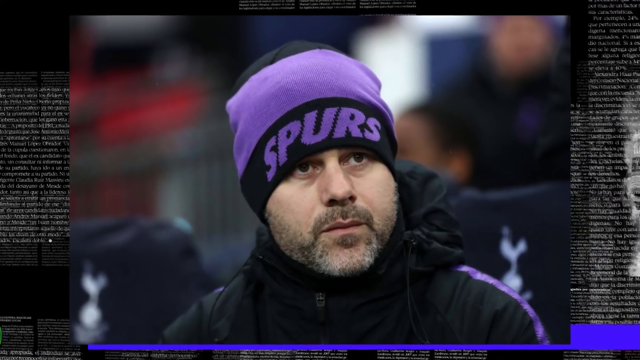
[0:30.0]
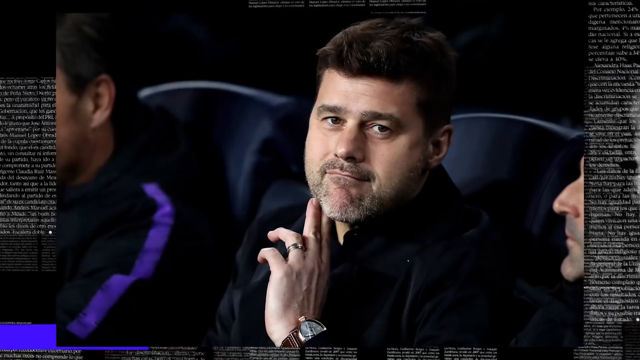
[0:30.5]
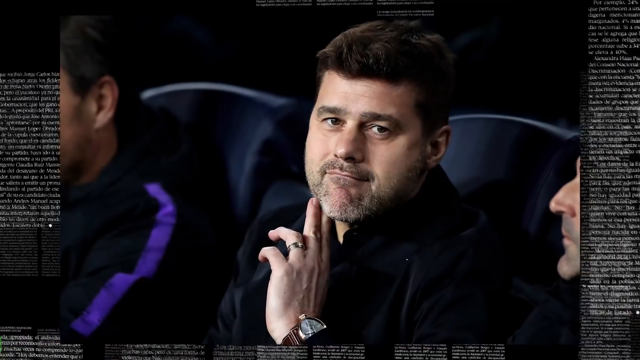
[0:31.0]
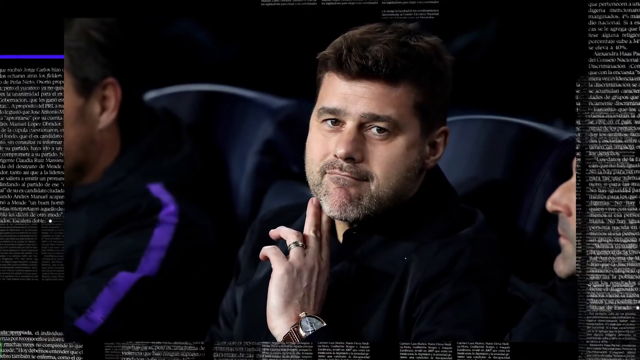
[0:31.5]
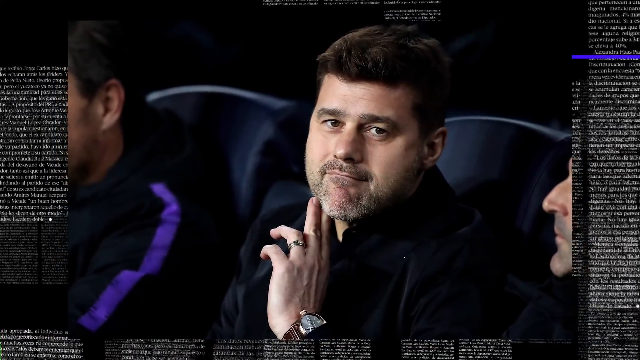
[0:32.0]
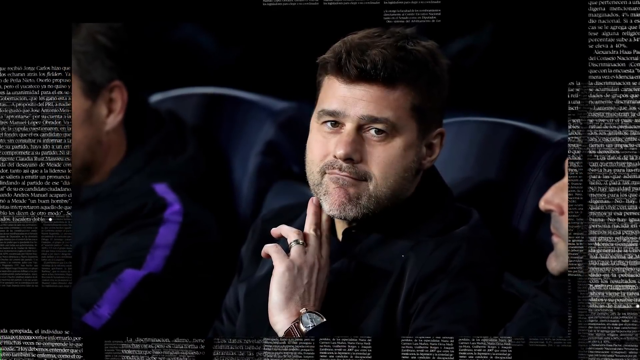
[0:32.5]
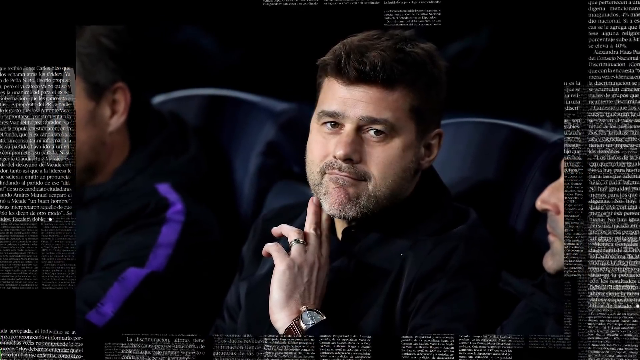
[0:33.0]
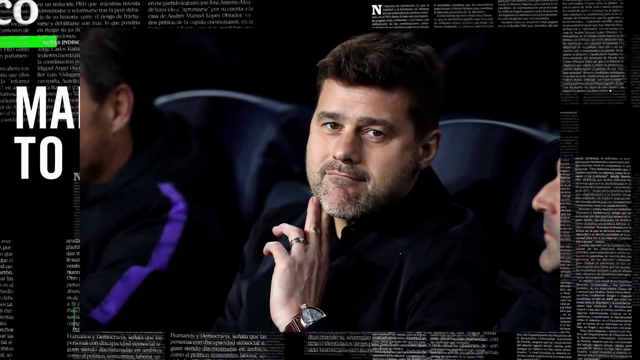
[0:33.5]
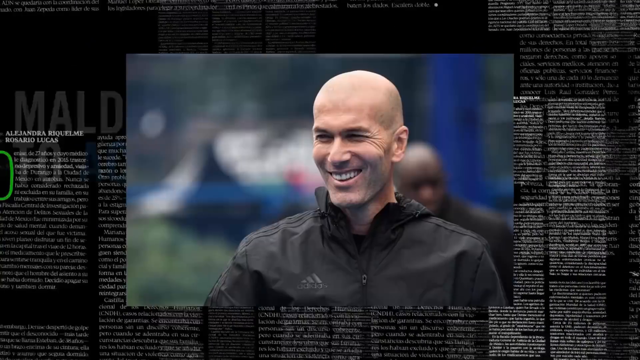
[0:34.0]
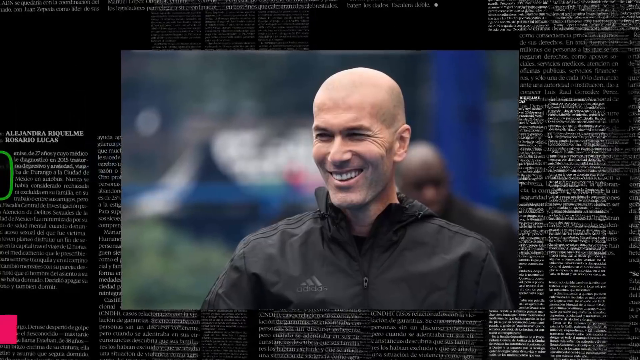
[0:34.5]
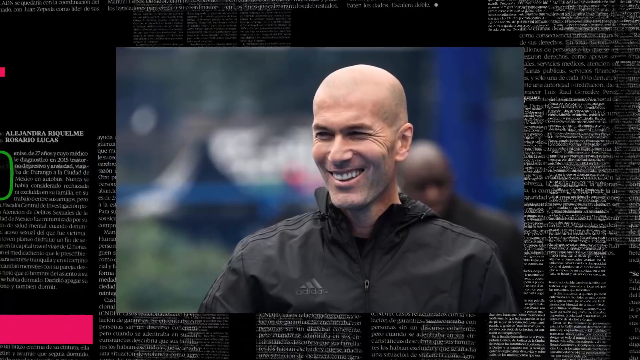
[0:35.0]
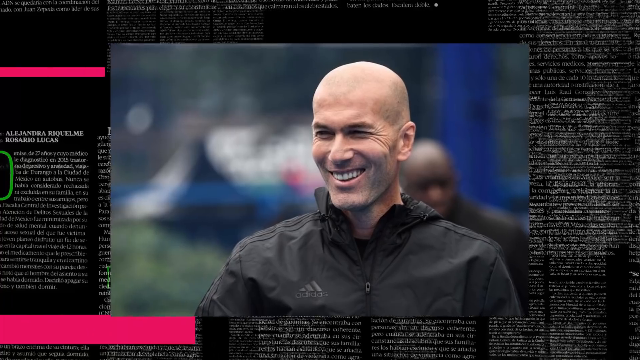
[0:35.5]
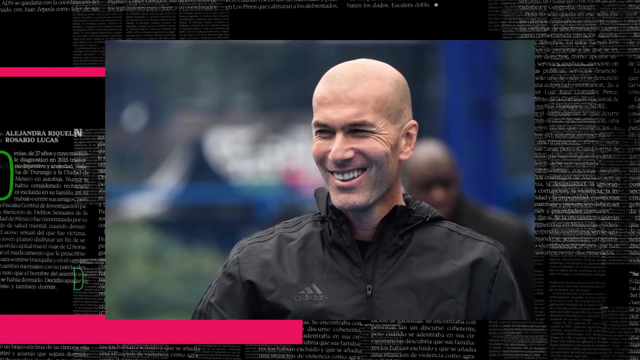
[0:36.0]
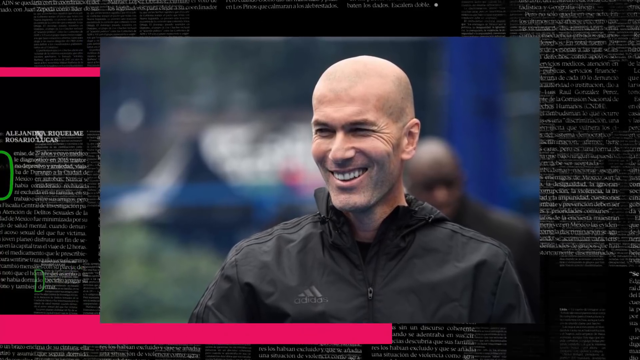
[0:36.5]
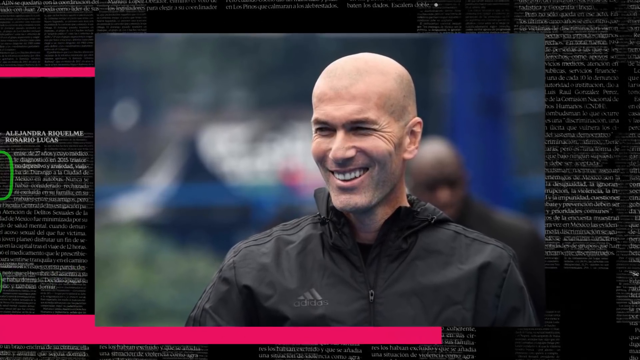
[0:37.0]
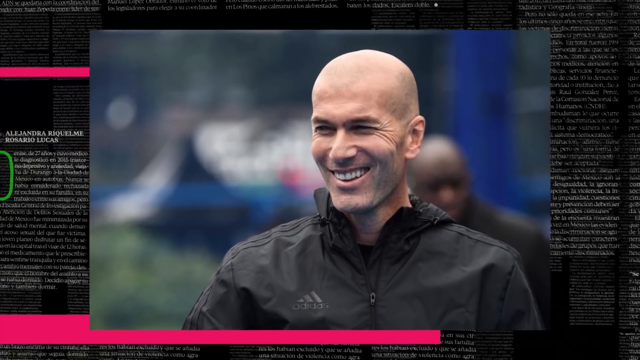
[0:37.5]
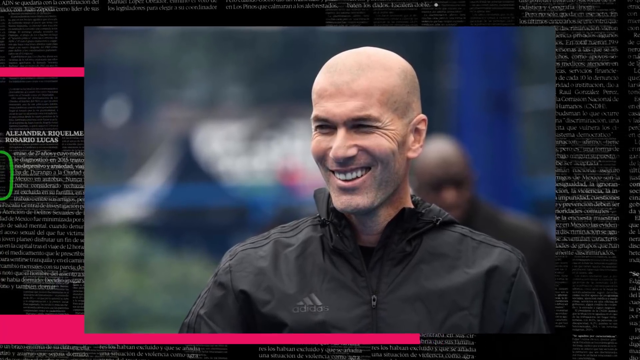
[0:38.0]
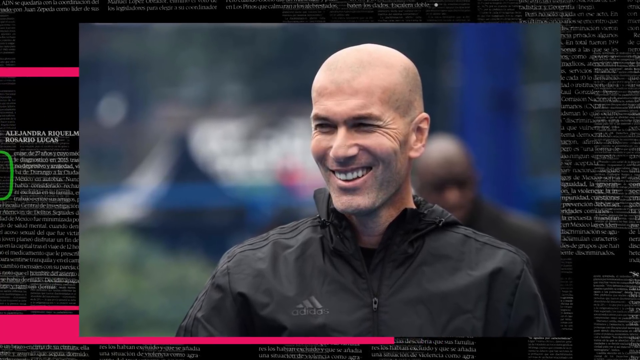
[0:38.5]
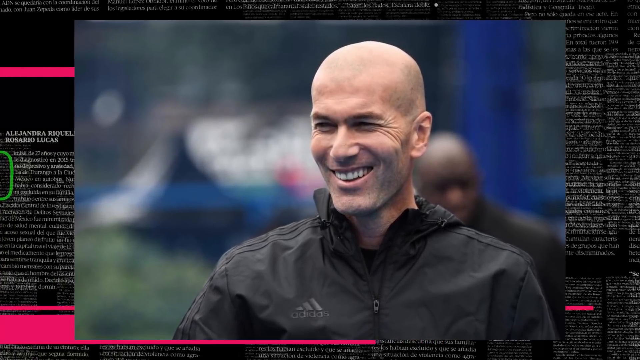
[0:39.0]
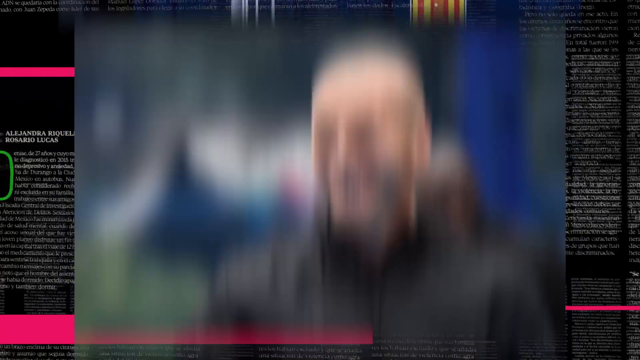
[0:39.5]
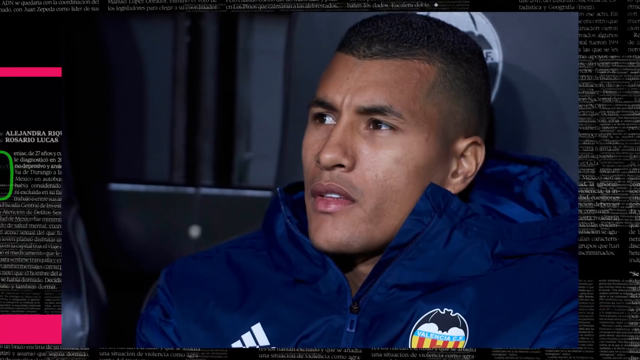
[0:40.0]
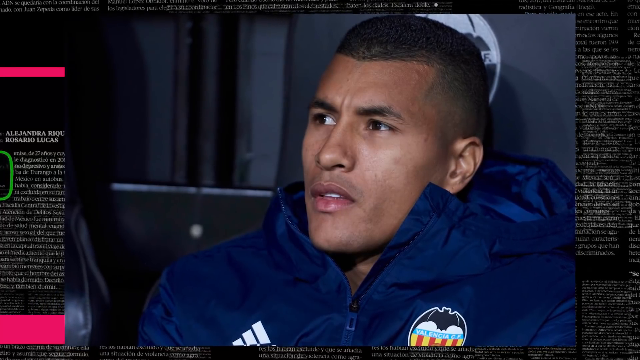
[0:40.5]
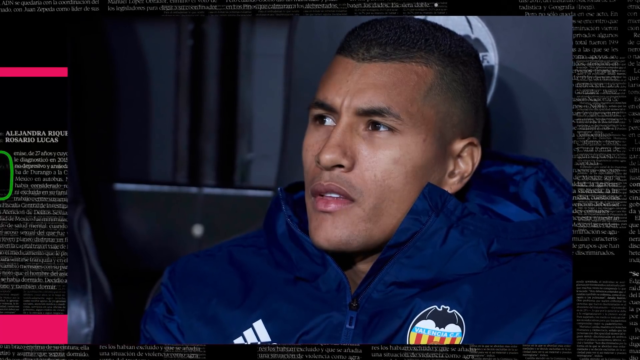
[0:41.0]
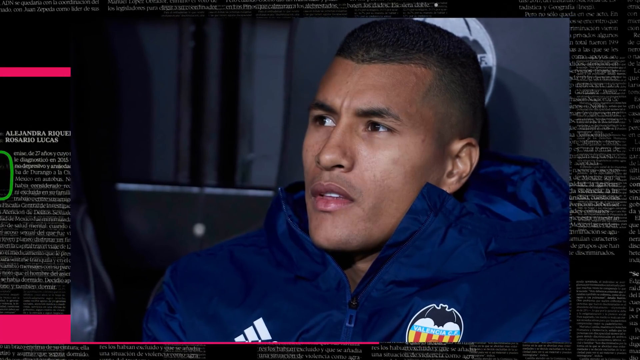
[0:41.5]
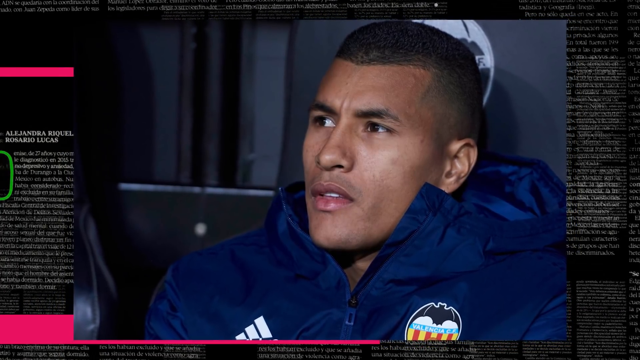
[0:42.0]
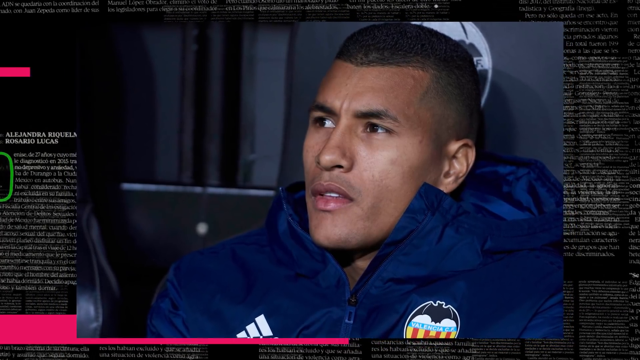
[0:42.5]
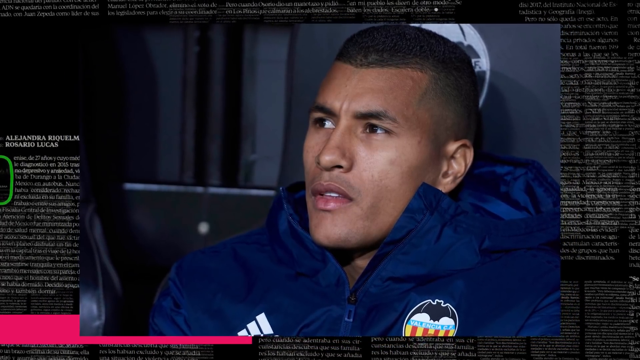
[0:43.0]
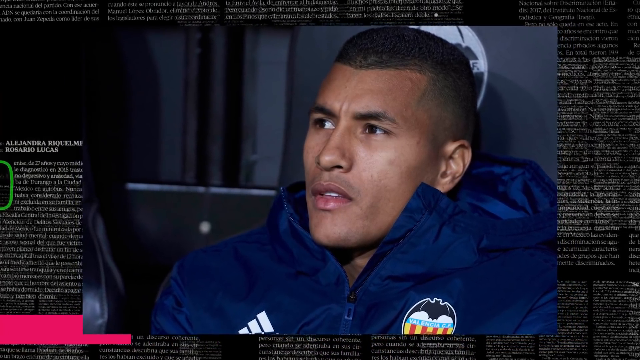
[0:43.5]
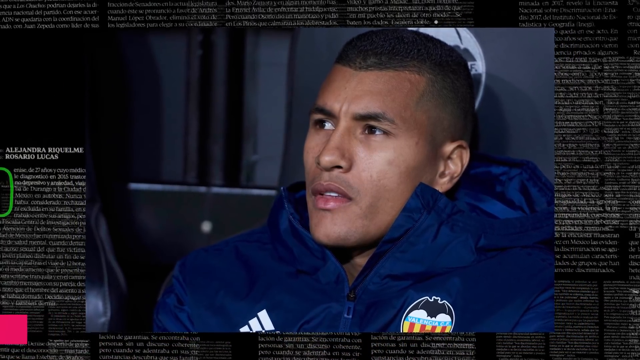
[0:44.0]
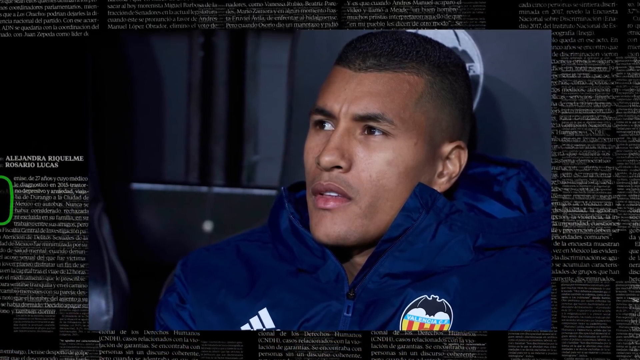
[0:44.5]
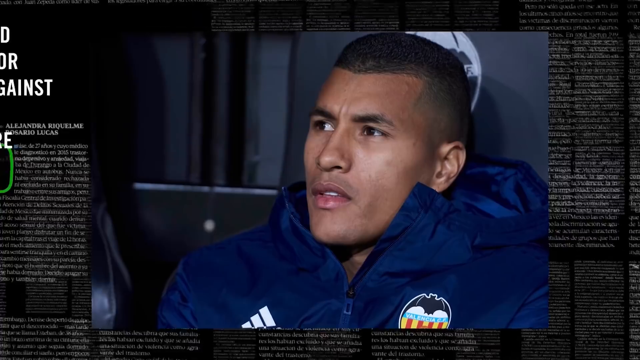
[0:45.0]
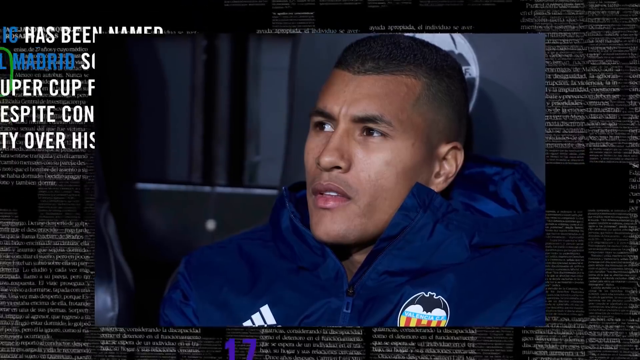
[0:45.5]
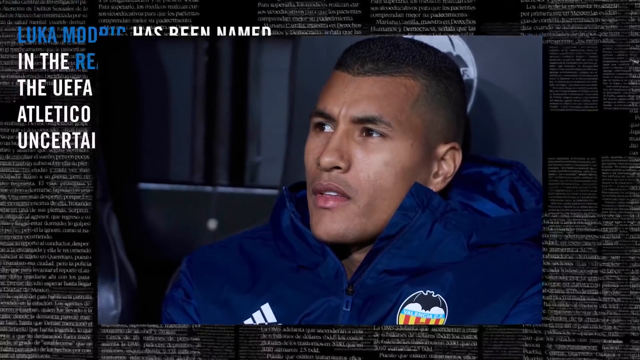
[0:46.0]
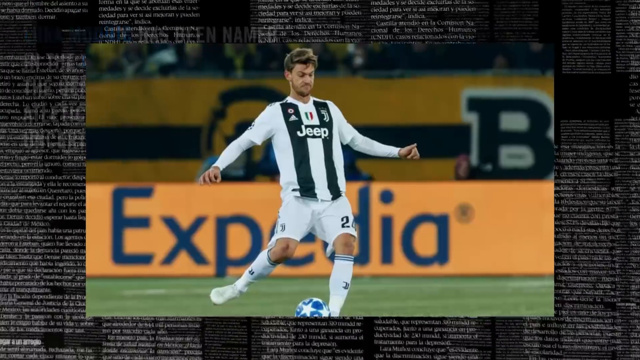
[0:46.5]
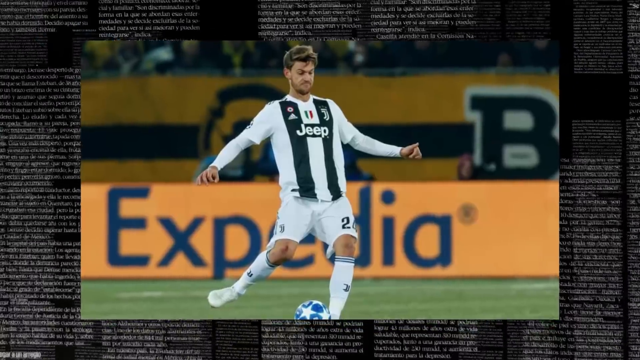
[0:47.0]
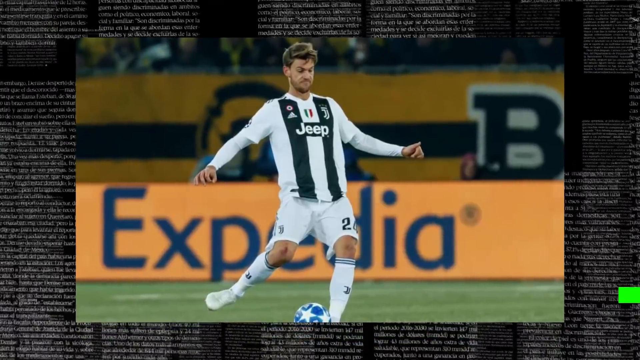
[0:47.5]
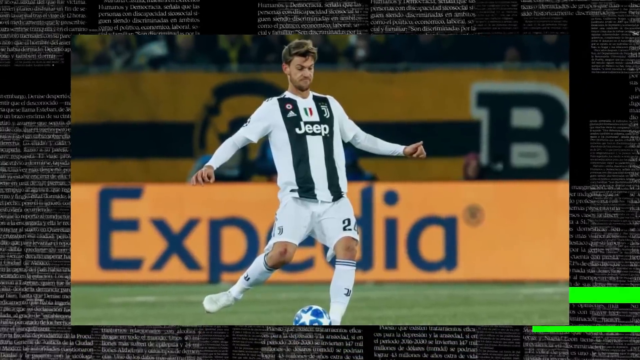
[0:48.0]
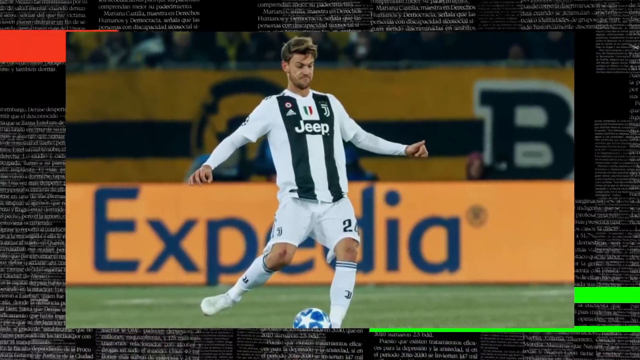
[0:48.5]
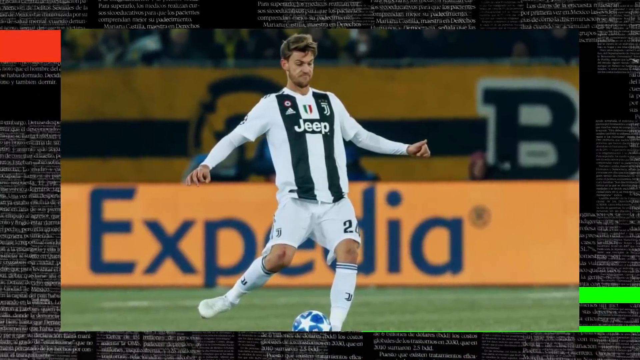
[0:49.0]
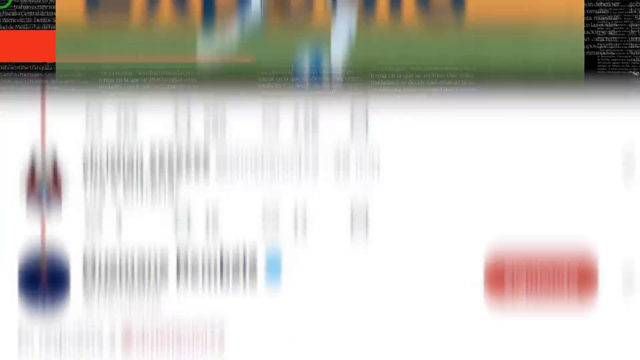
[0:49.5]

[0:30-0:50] An image shows a man sitting in a high-backed black chair, with bits of the faces of different people visible to the left and right. The person on the left has a purple stripe on his black shirt. The man in the center seems to be wearing a black suit; he looks very similar to the earlier man in the black and purple cap that says "Spurs". He is seated in sort of a meeting, holding his left hand under his chin. Next is an image of a bald man smiling broadly, wearing a black Adidas light jacket, the kind meant to be worn on the sports field; the image closes in to a close-up of him. Another image shows another man, with text above him on the screen that says "Keylor A. Londres?", followed by text beginning "PEP Solidario". He is a younger man with darker, caramel-colored skin, wearing a navy blue Adidas jacket. Then an image shows a man wearing a white shirt and shorts, with the number 24 on his left leg, which appears on the viewer's right. The logo on his shirt says "Jeep", with a black stripe to the left and a black stripe to the right and the word "Jeep" connecting the two sides. The same headline, "Keylor A. Londres", is still over the image.